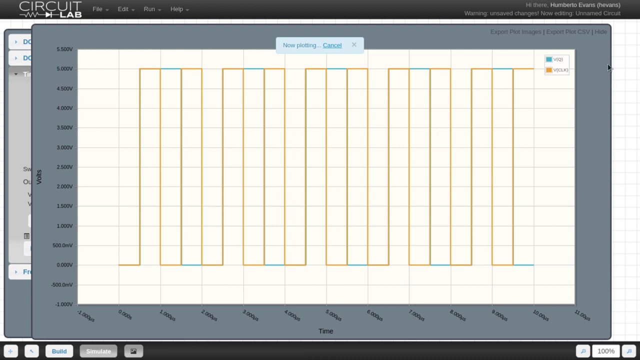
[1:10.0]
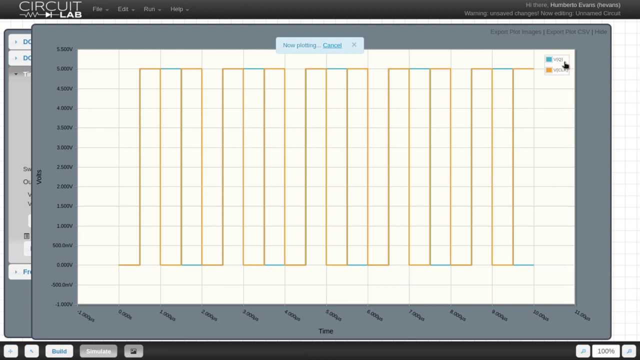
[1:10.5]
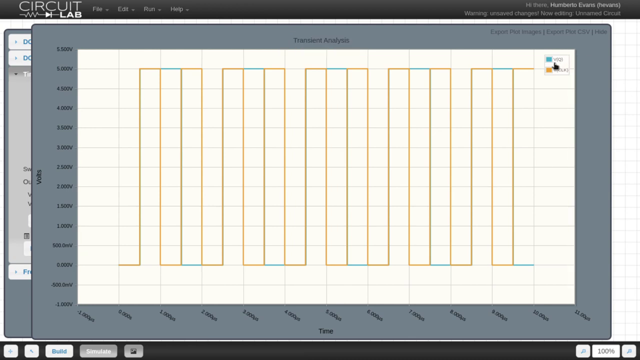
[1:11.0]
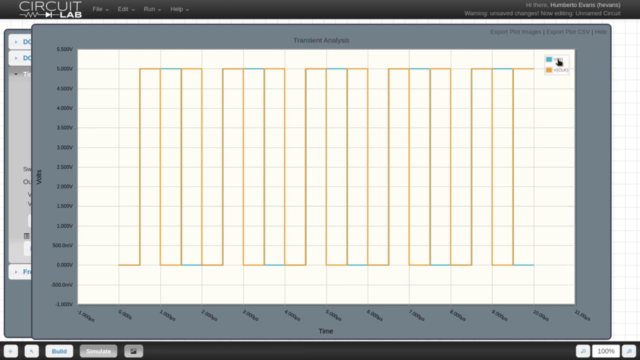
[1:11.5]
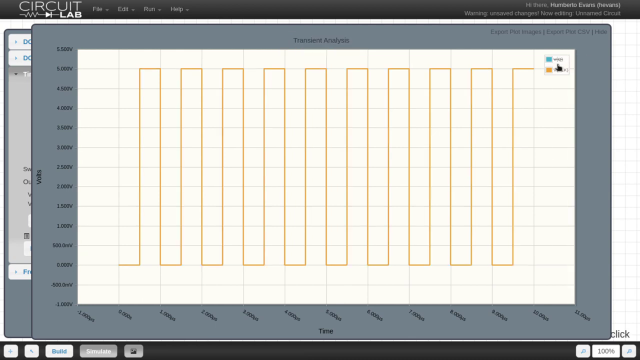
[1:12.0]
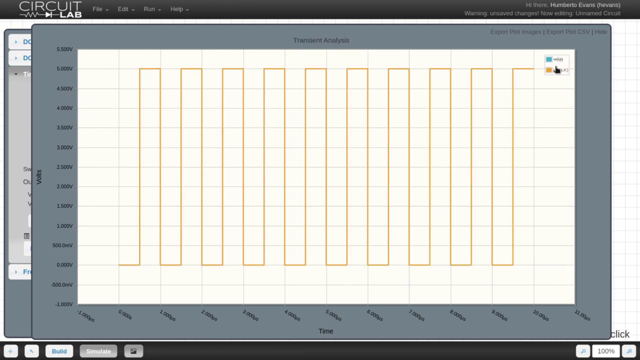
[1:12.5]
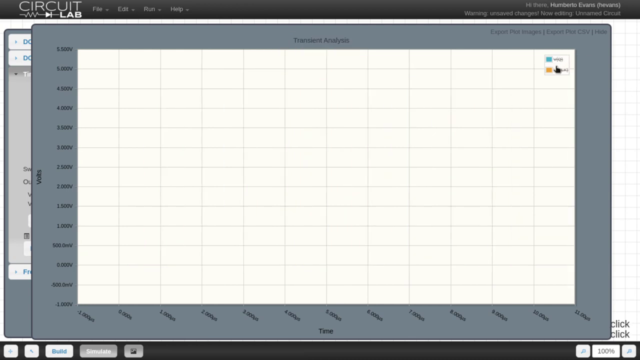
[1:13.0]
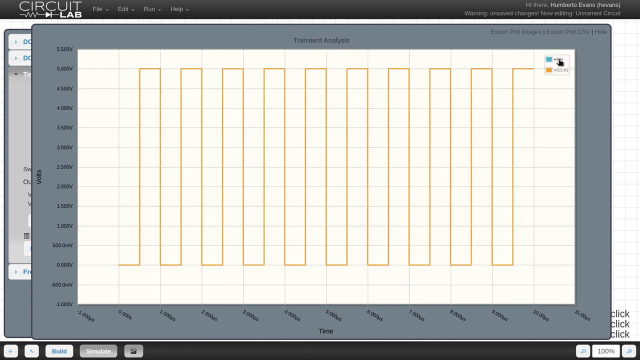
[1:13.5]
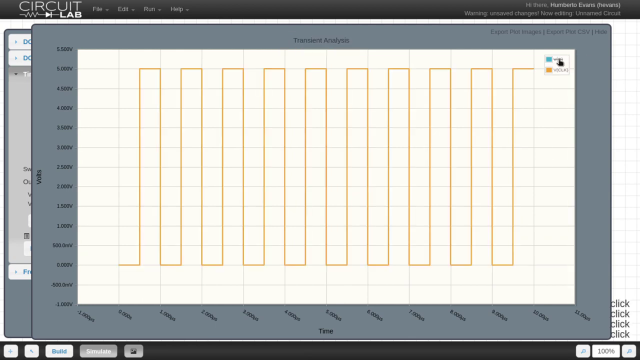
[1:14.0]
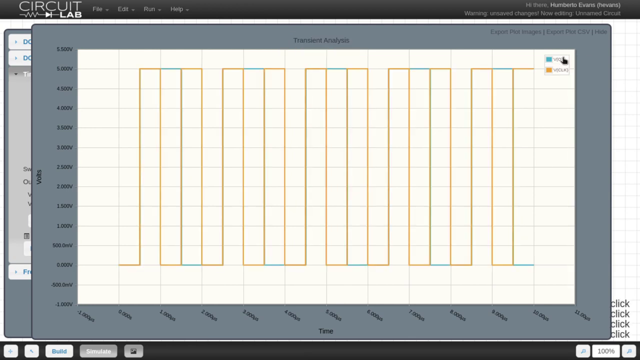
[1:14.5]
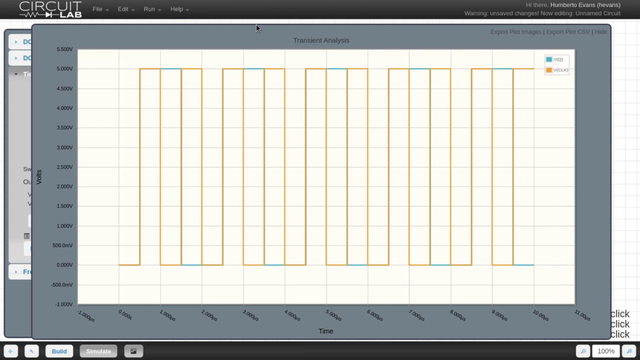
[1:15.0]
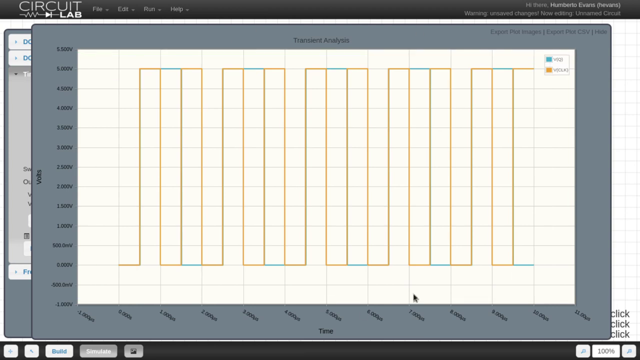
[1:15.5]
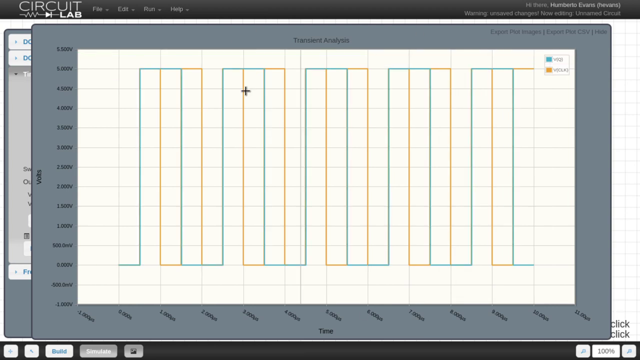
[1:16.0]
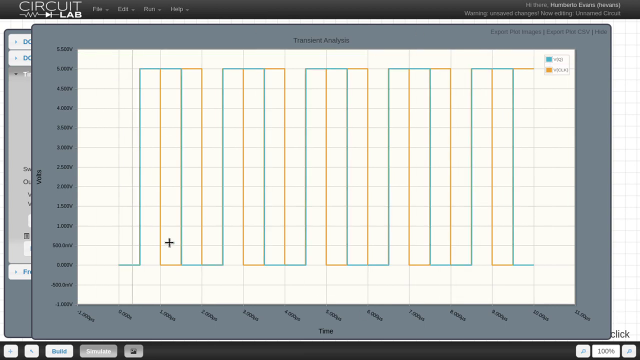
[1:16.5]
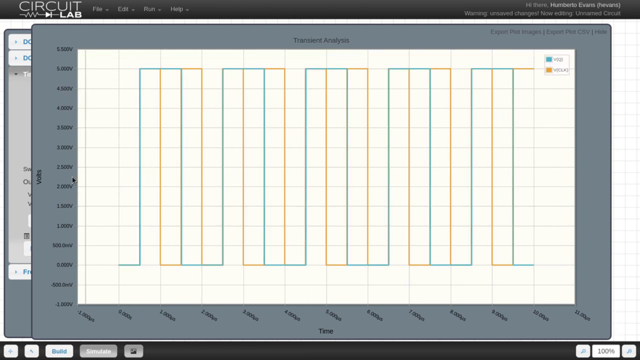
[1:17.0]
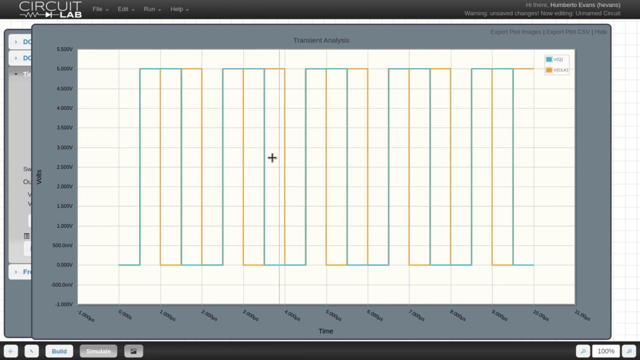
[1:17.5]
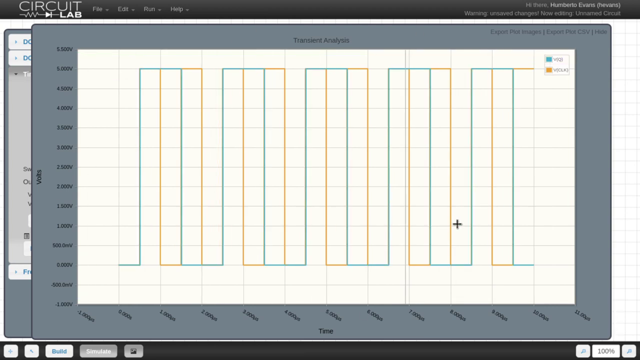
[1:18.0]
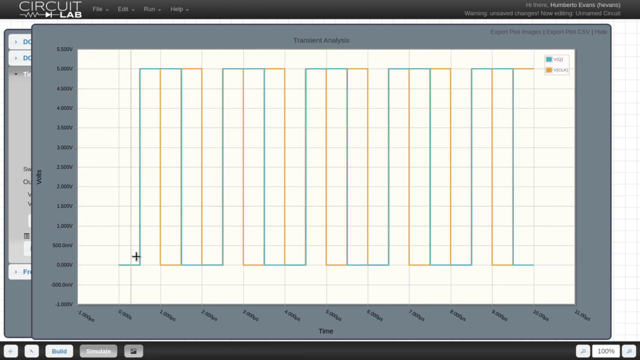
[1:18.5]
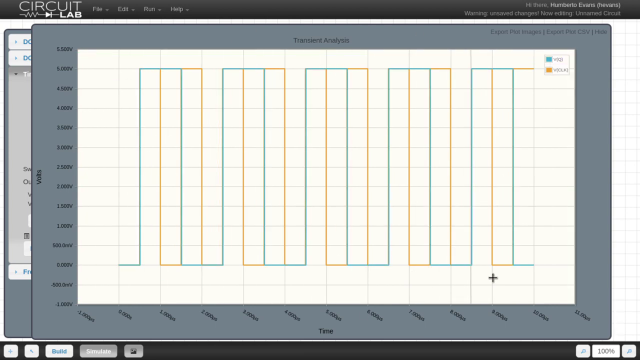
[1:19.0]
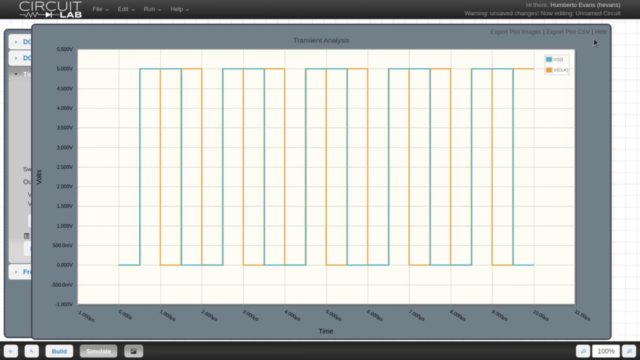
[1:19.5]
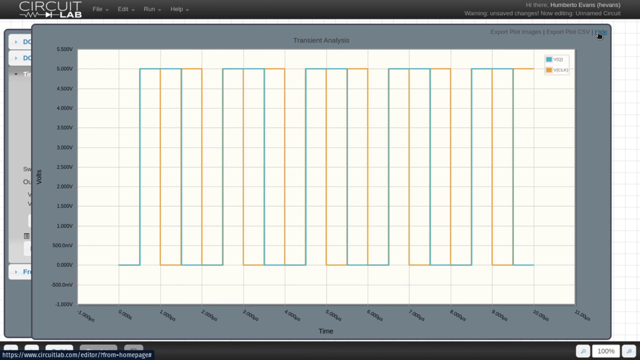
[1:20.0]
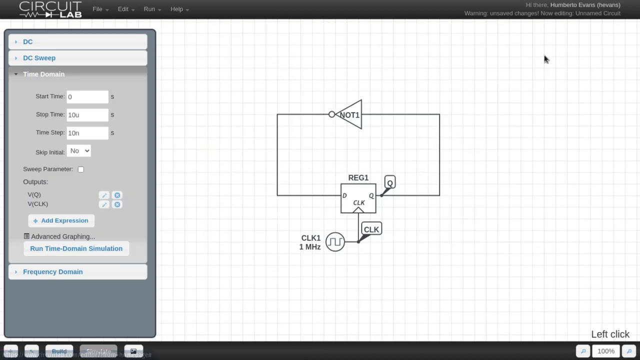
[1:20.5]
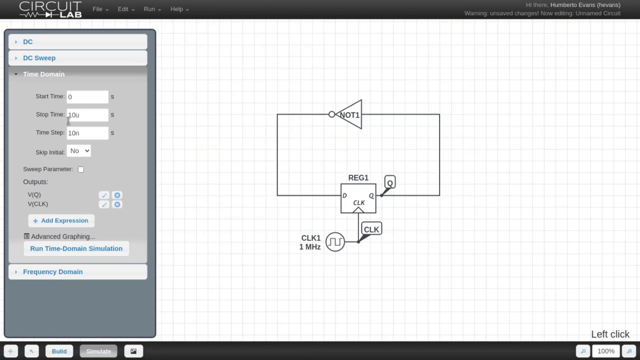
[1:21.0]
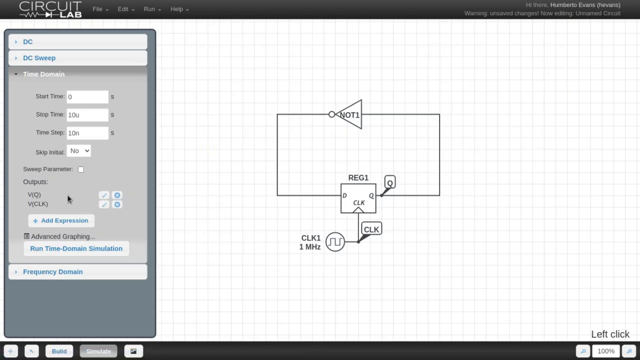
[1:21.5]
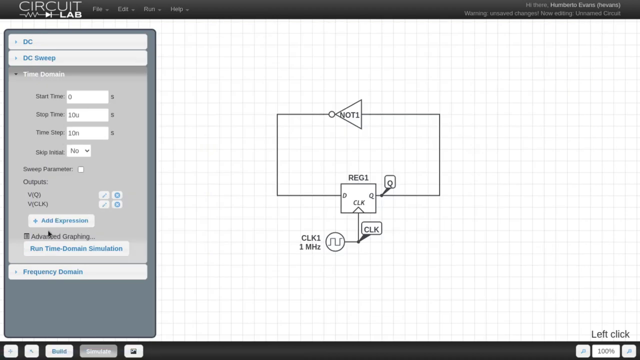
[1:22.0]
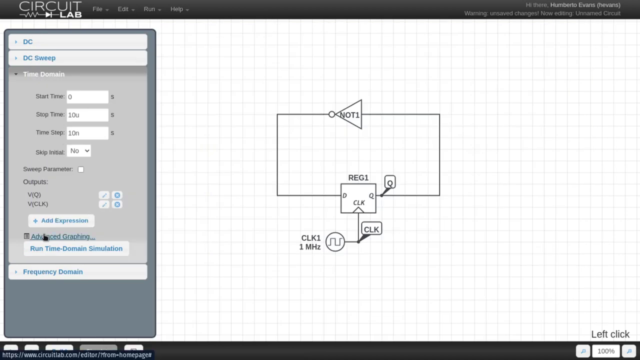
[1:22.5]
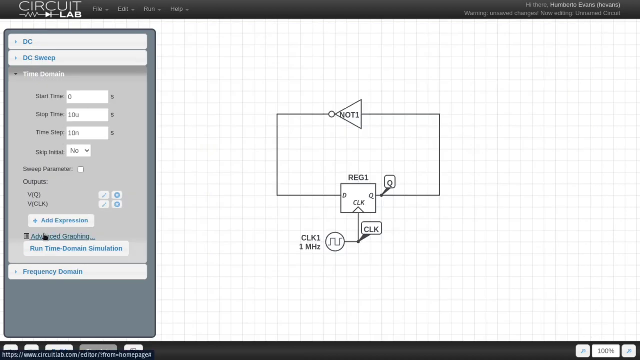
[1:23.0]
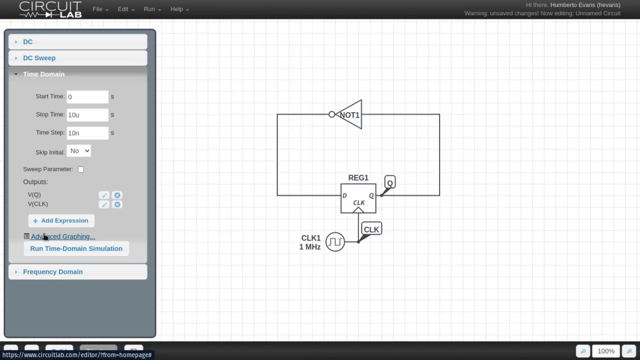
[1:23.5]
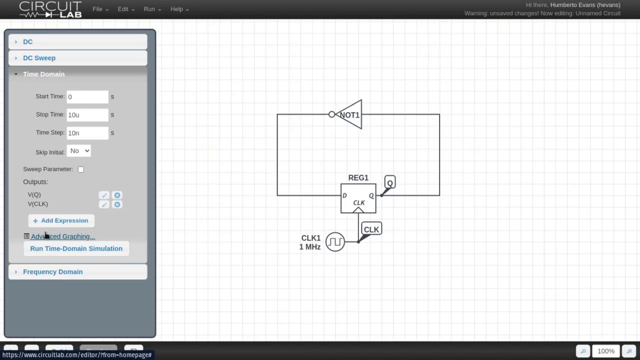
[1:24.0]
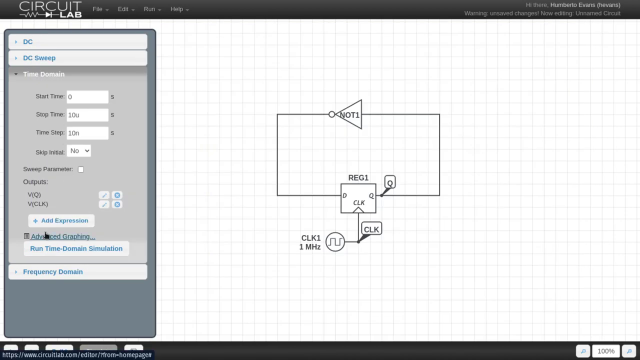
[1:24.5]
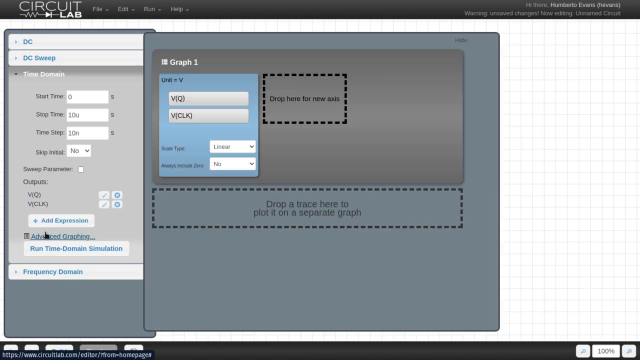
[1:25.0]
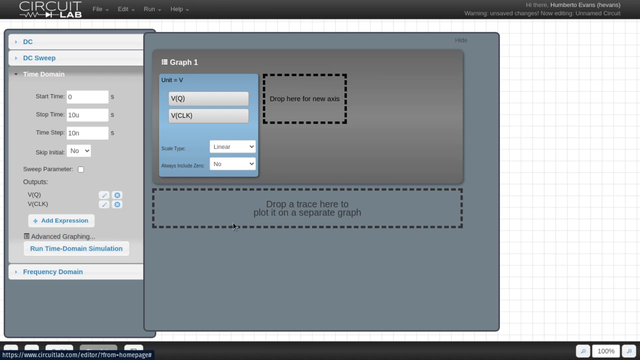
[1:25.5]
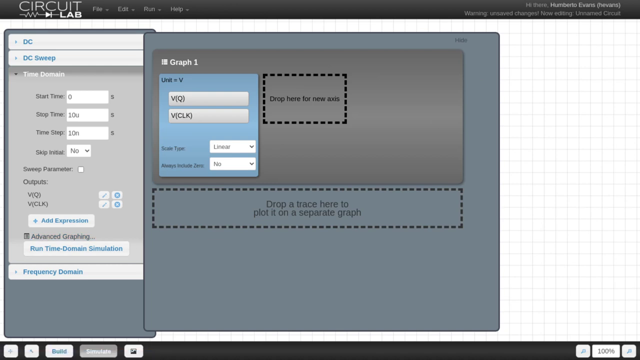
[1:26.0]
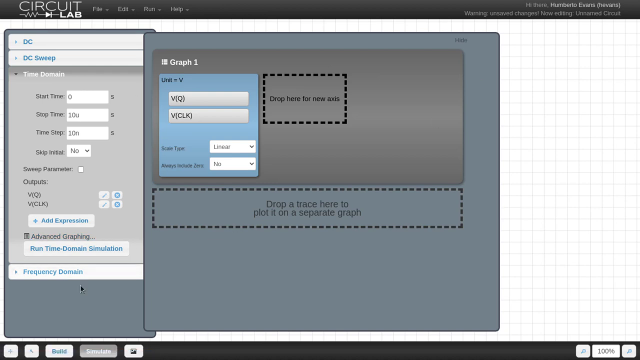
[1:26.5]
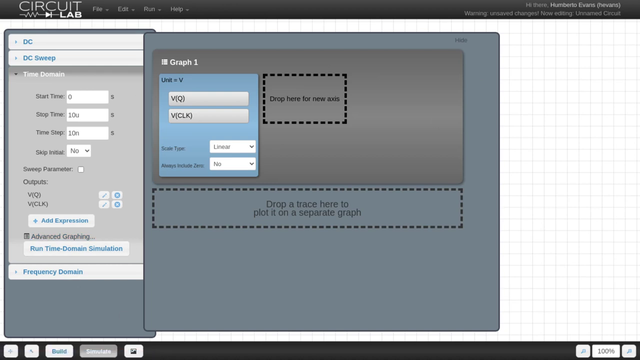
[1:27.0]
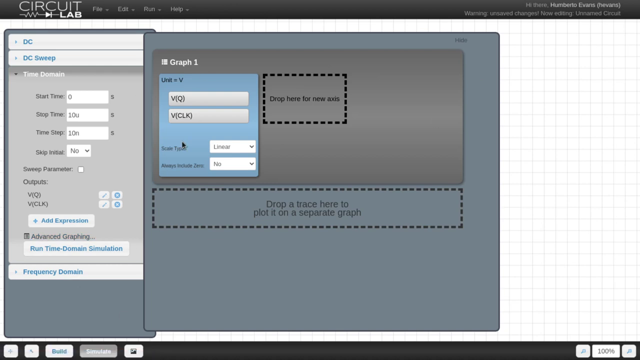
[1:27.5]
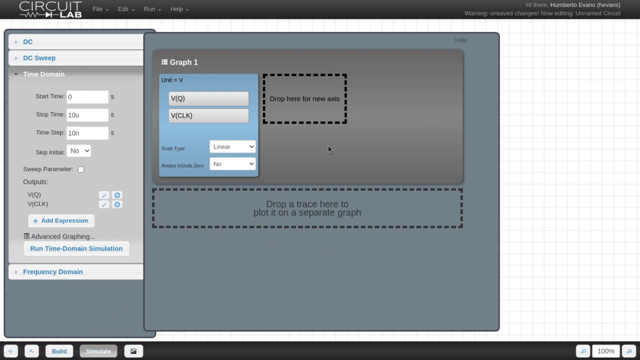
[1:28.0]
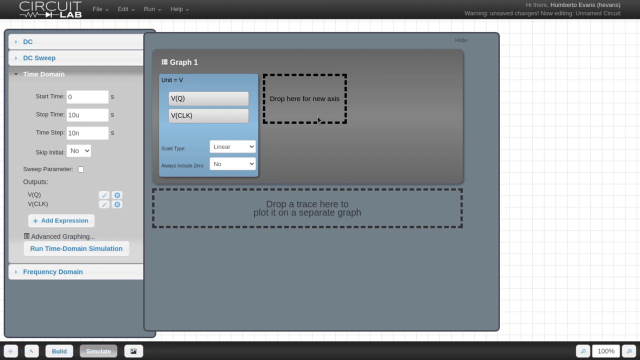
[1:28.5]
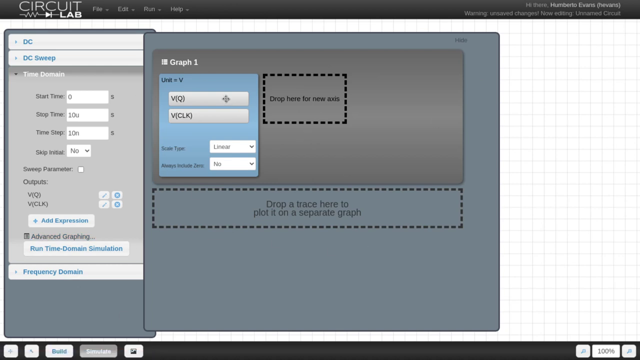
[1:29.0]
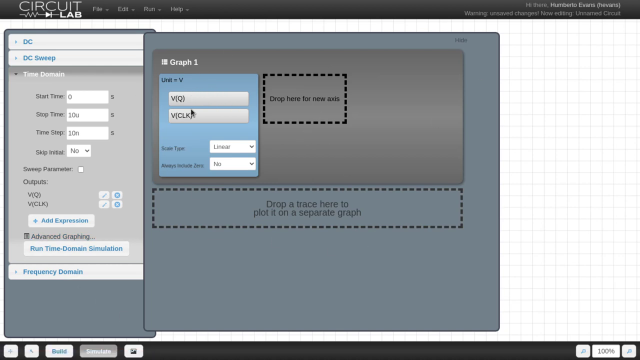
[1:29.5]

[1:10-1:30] The screen recording of Circuit LAB shows how to analyse a circuit through graphics. The cursor first moves around the whole screen, goes to a graphic and closes it, then returns to the tools on the left side of the program. The cursor moves to an option called new advanced graphic, which opens a small window showing graph one; the graph is copied to make a new axis, and parameters such as volts or time are clicked to show or hide them. That graphic is then closed and a new one opens, where objects can be dragged to create a new axis.